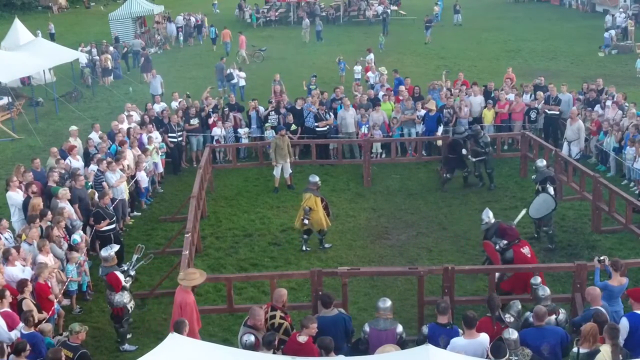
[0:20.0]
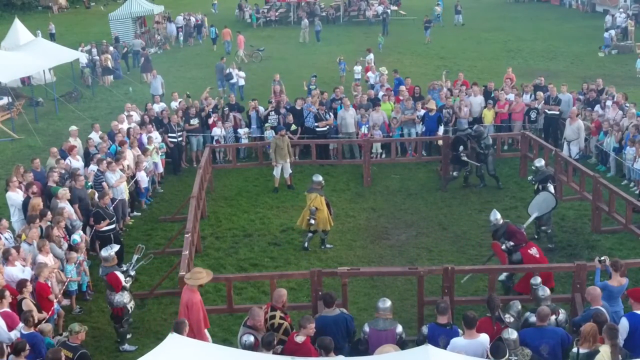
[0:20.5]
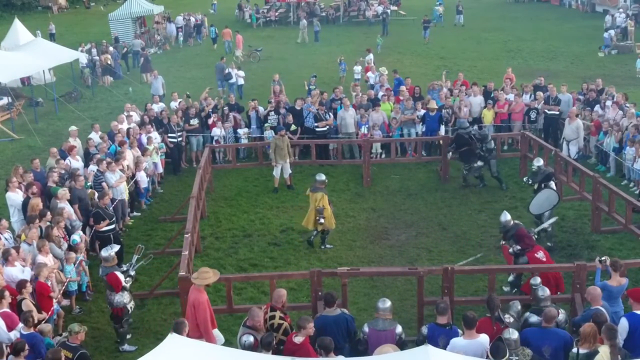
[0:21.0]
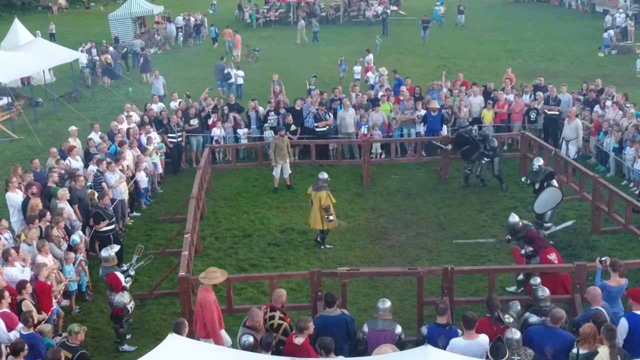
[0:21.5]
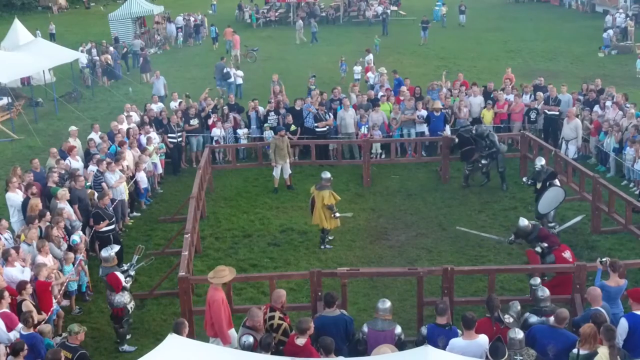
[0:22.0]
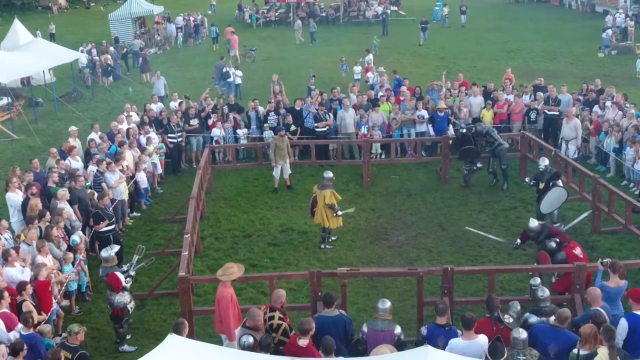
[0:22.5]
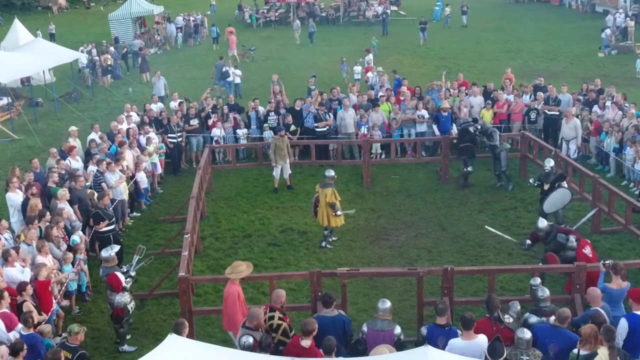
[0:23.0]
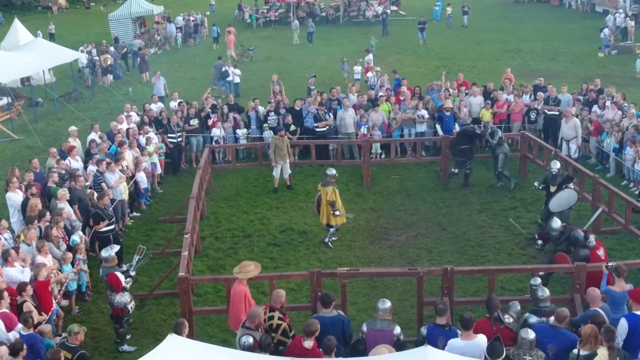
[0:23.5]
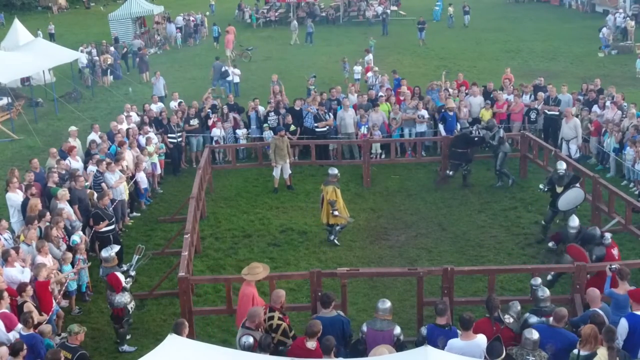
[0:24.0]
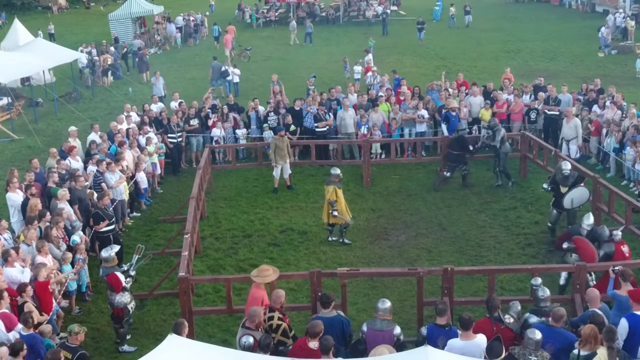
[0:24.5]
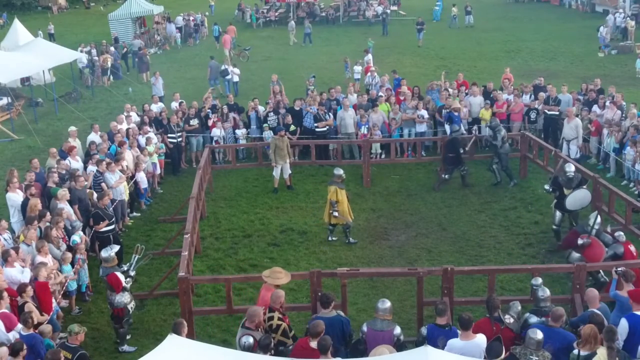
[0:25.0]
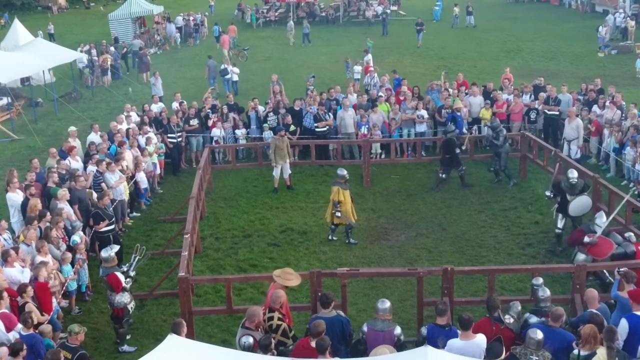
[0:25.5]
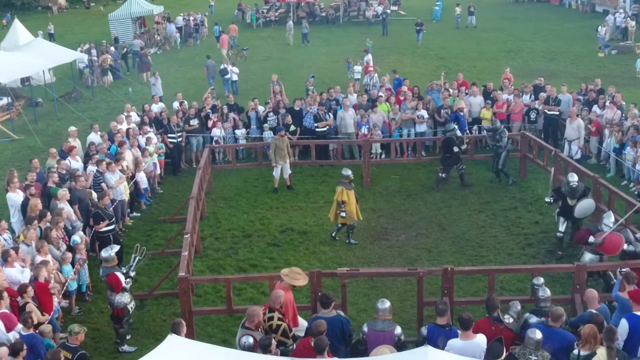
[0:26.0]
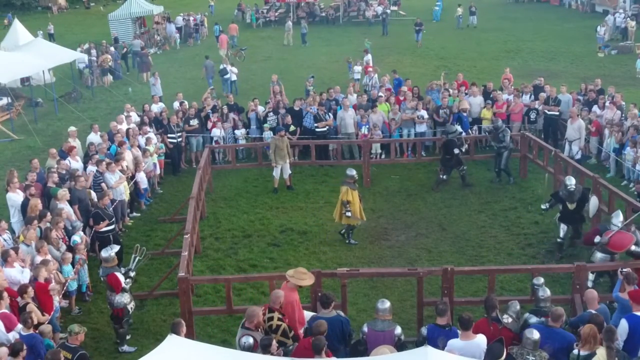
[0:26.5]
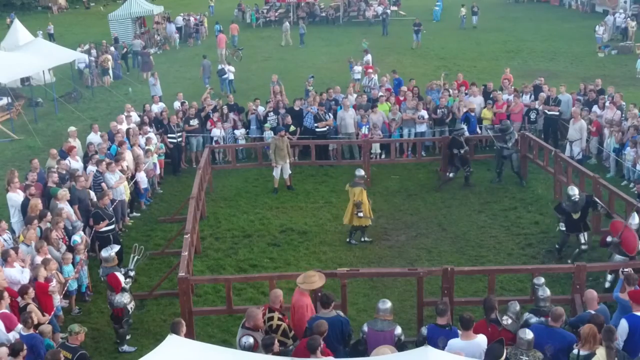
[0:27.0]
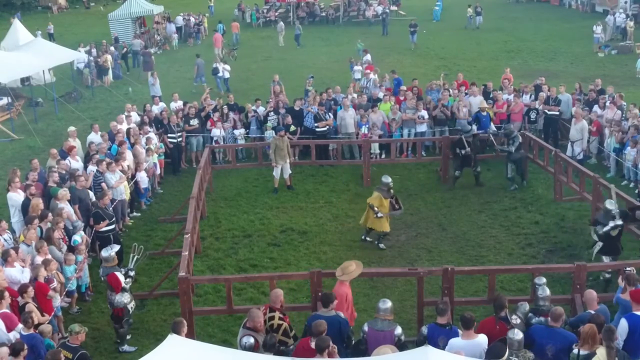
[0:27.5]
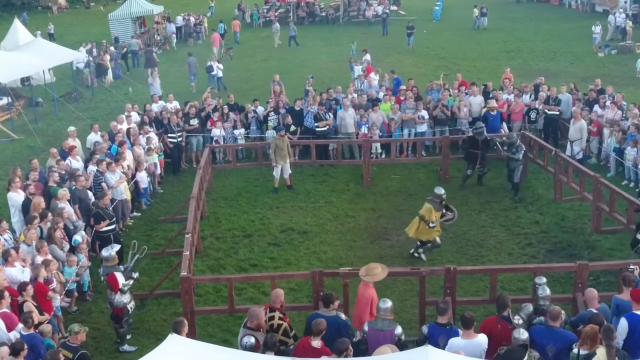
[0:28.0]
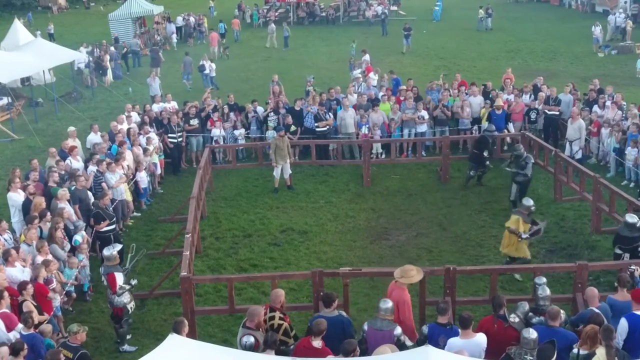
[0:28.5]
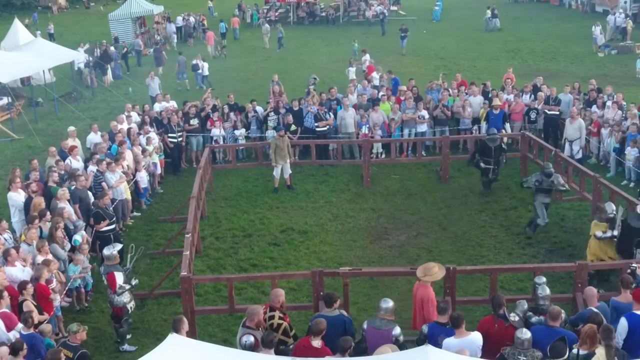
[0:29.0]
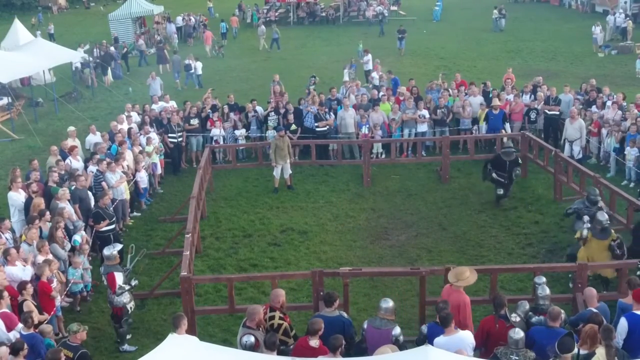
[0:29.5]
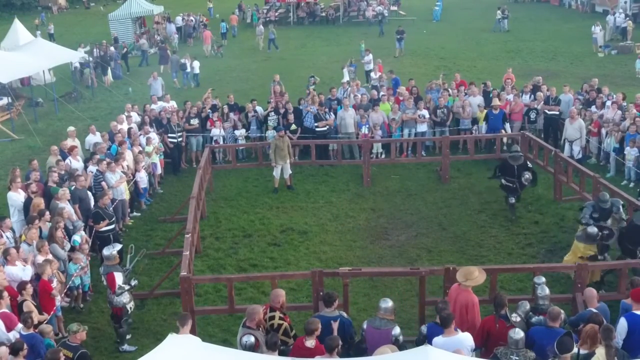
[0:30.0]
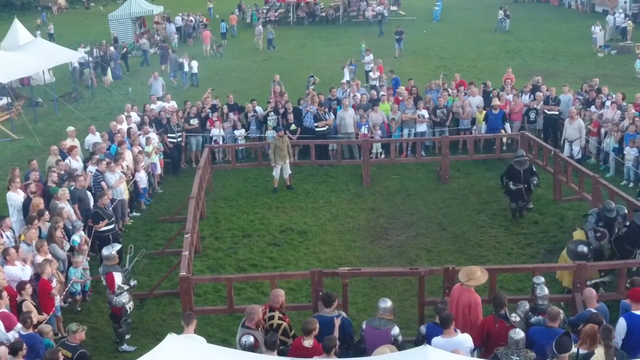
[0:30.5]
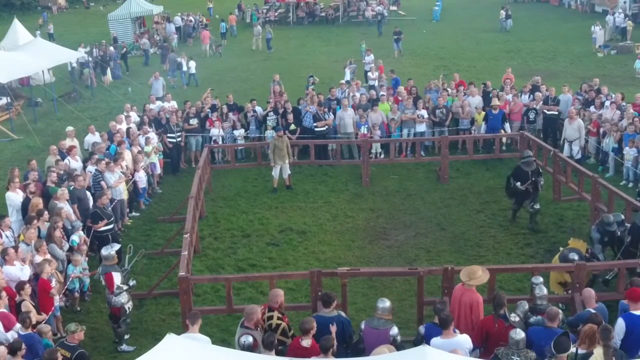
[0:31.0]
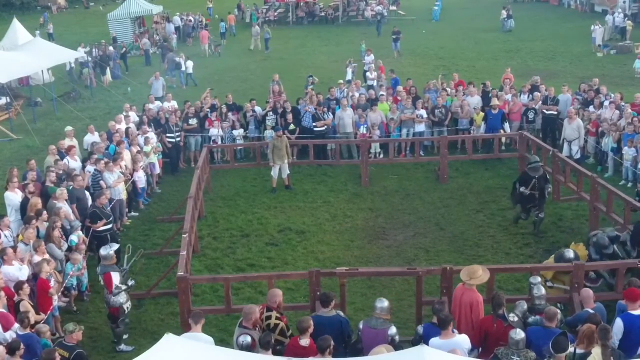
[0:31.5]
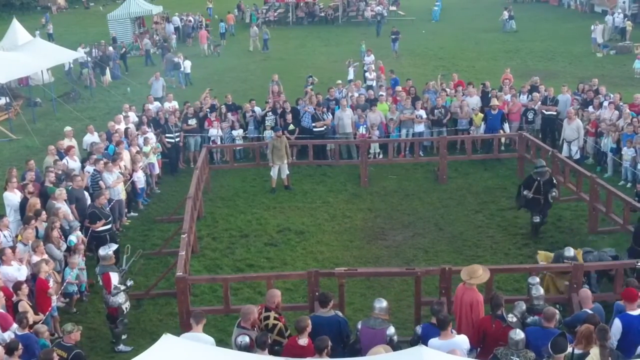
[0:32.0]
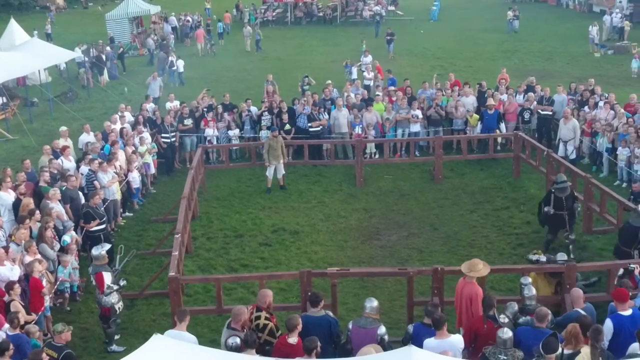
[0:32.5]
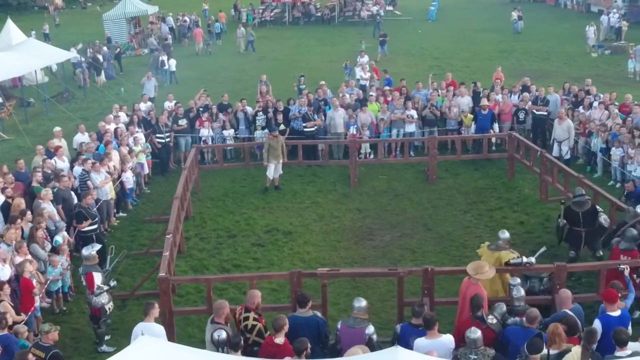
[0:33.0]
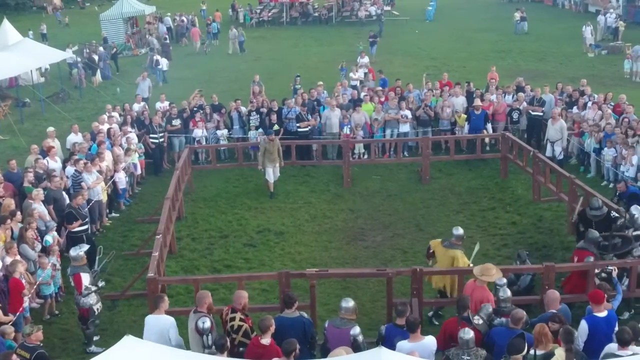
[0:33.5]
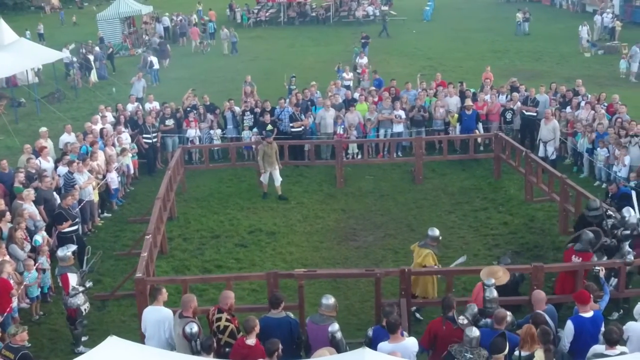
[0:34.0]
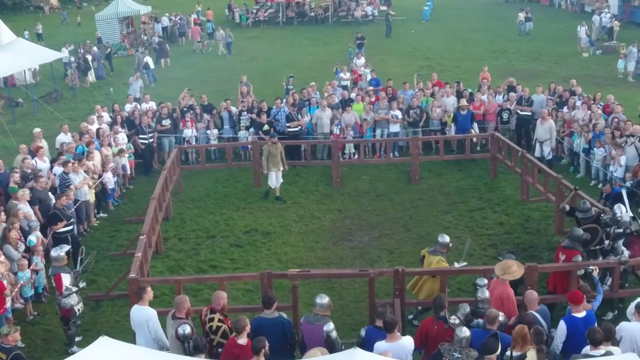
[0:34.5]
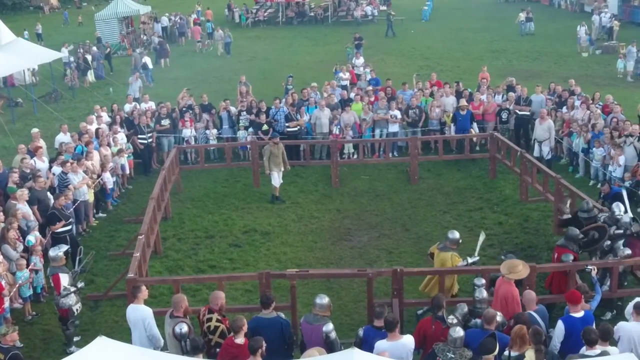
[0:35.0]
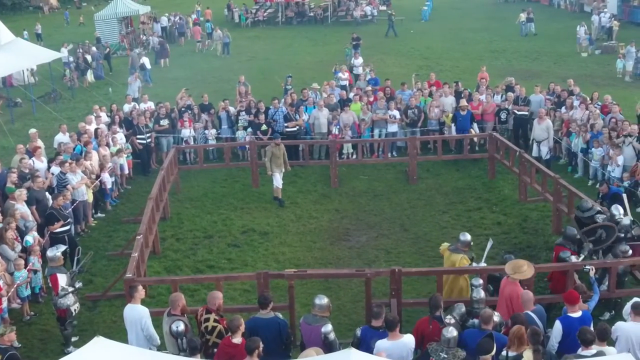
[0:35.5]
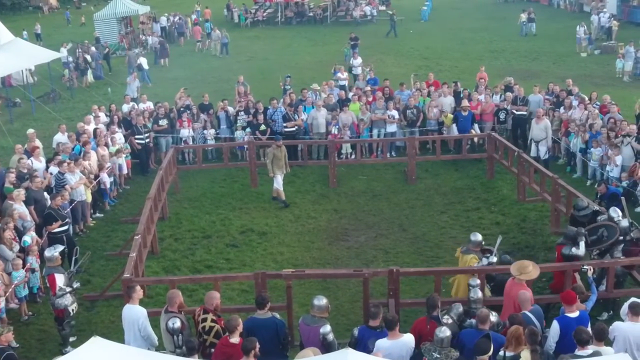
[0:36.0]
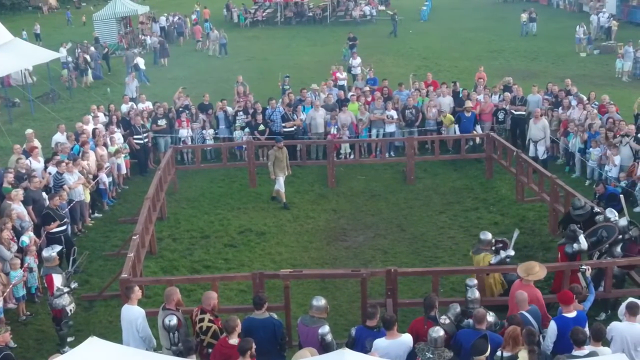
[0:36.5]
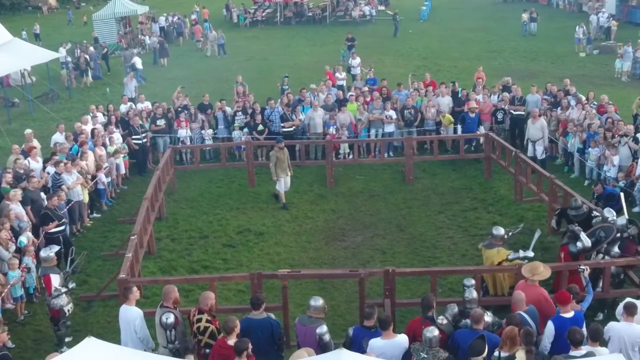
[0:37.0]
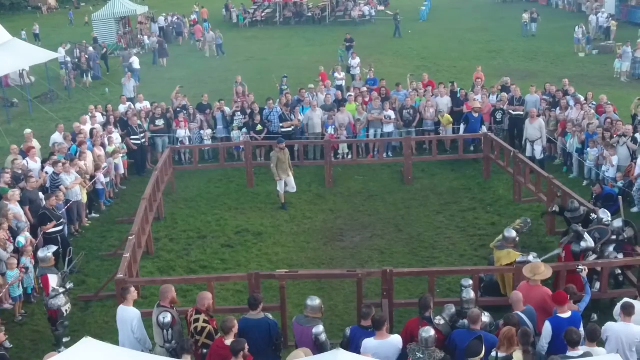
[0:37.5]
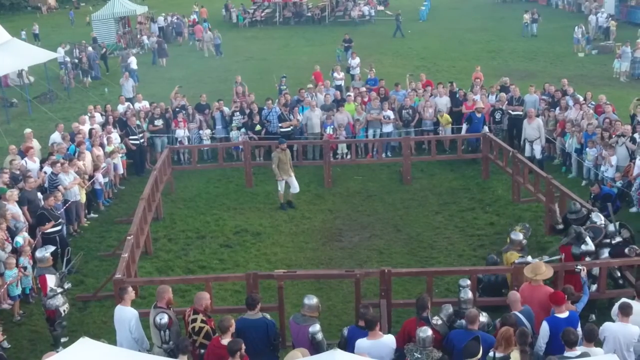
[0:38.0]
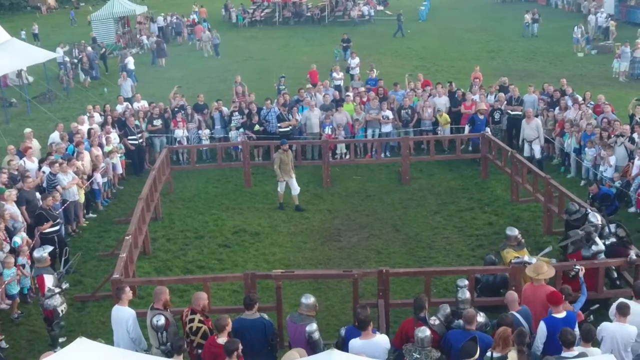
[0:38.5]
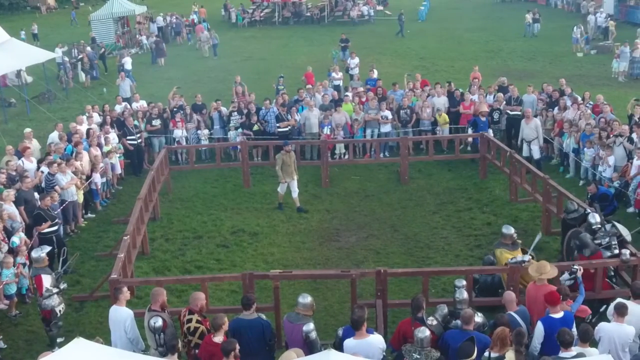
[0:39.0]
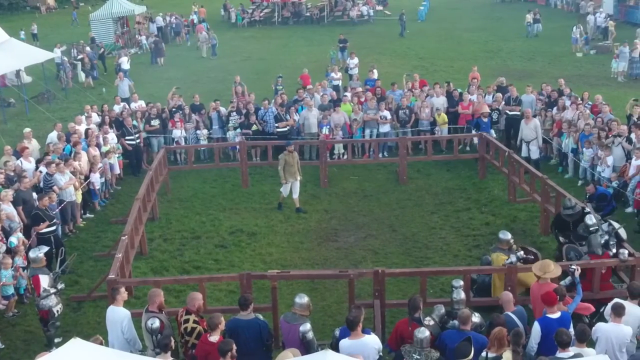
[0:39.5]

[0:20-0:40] The fight continues, shot from an elevated perspective looking down on the performers from a somewhat distant position. The fighters at the bottom continue to grapple, with one of them seemingly attempting to control the other's head. The fighters in the background appear to be disengaging from each other. The fighters in the foreground then go partly off-screen to the right, and the individual fighters off to the left and right rush in and appear to try to get involved. The one that was on the left begins swinging his sword, and the fighters in the background, having disengaged from each other, rush in as well. They are now all in the bottom right corner, and they all appear to be swinging and engaging in a chaotic melee. Near the end, the non-combatant in the top left also begins stepping forward.